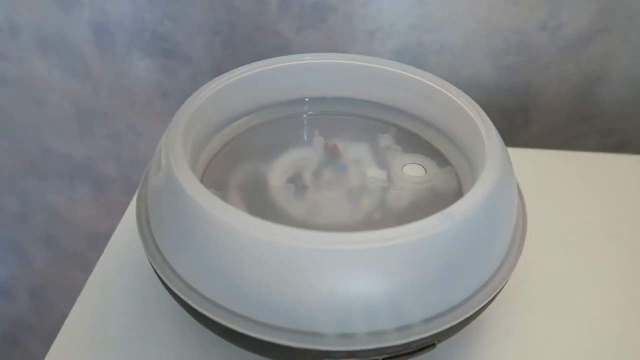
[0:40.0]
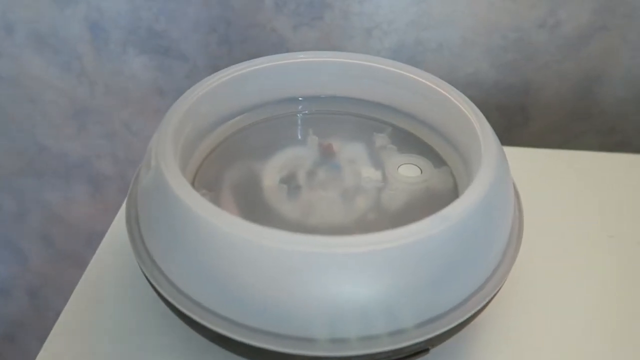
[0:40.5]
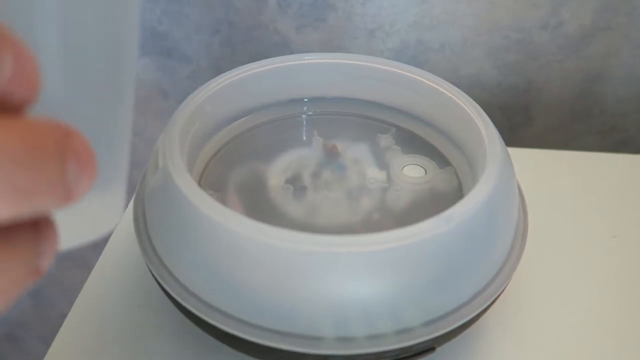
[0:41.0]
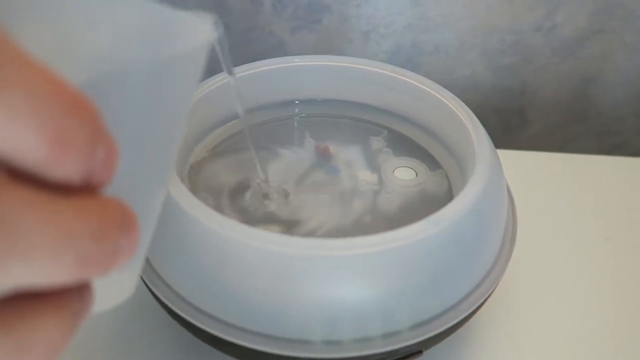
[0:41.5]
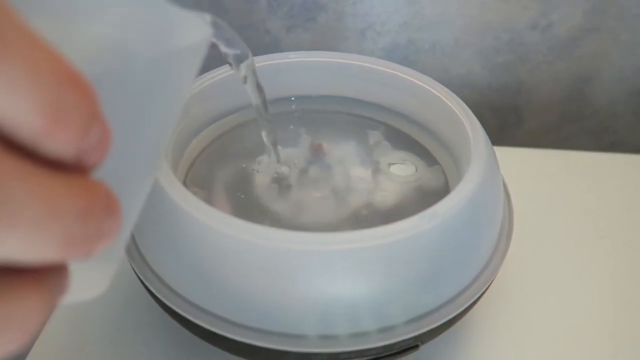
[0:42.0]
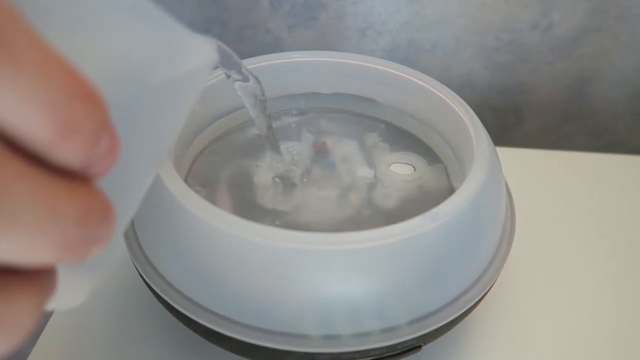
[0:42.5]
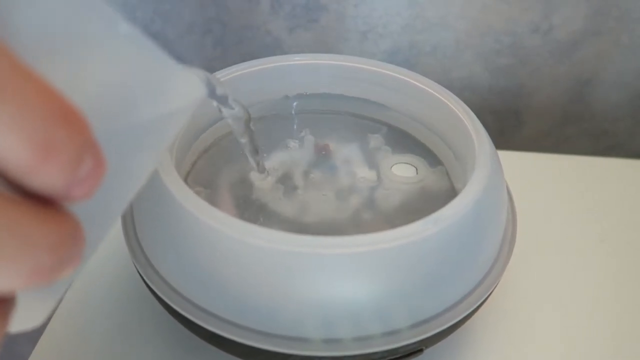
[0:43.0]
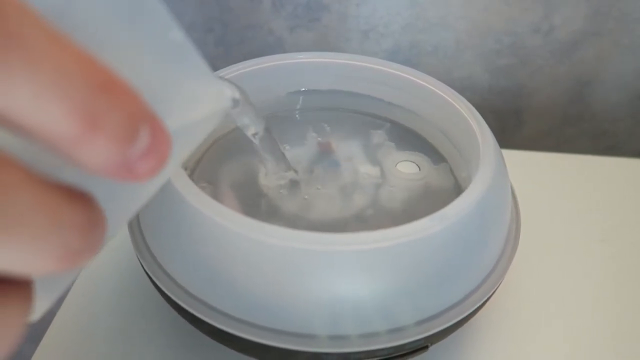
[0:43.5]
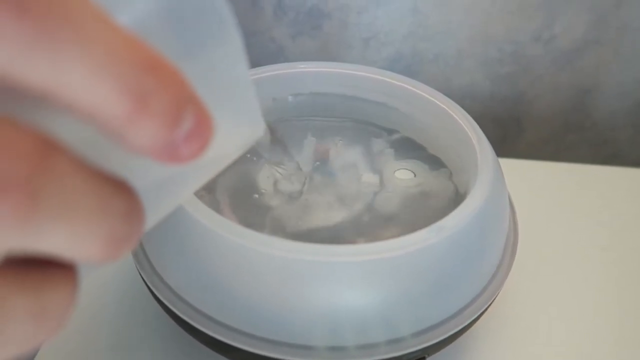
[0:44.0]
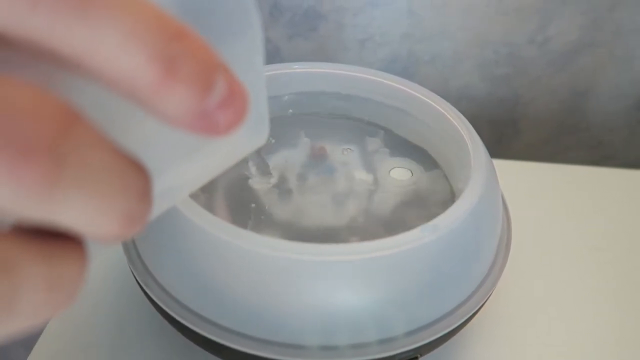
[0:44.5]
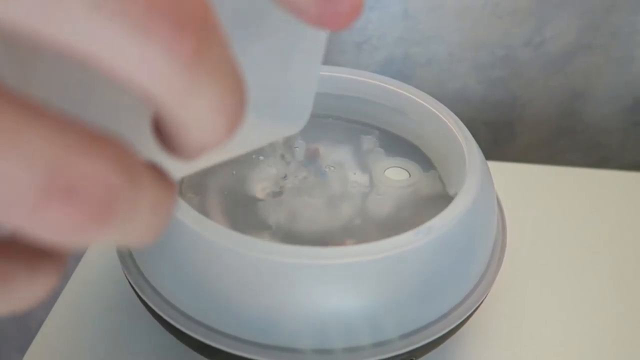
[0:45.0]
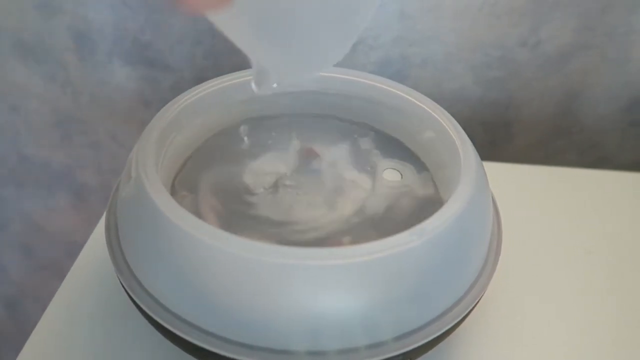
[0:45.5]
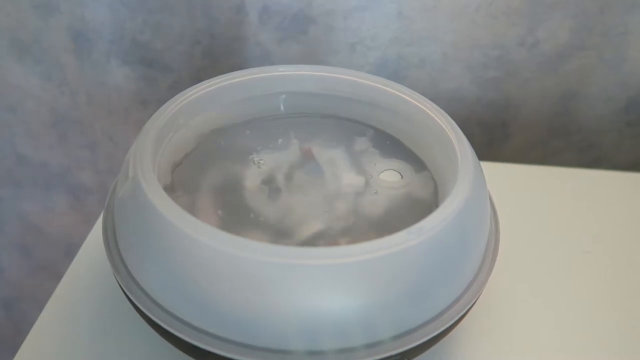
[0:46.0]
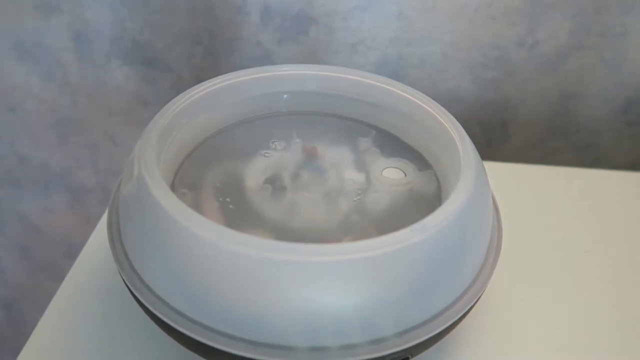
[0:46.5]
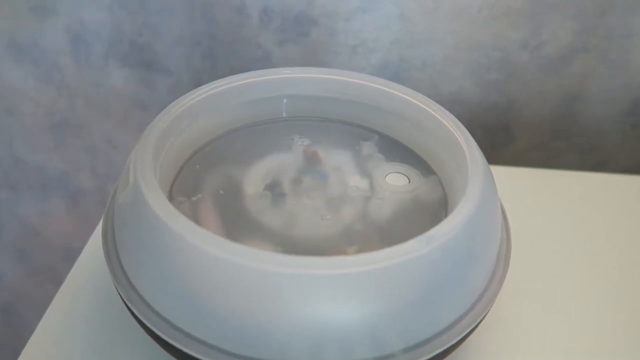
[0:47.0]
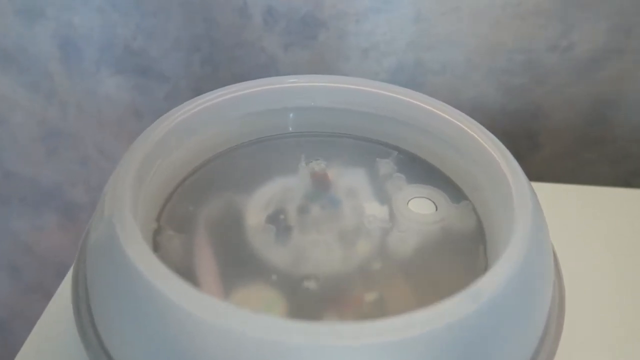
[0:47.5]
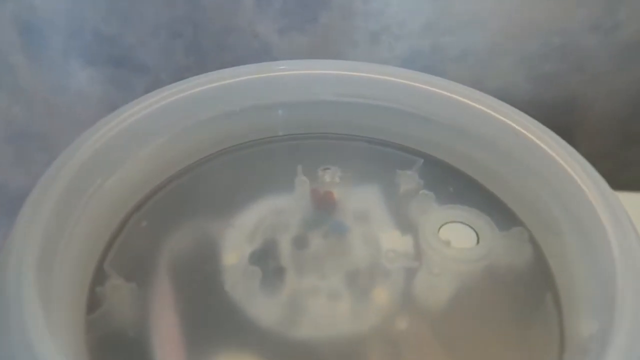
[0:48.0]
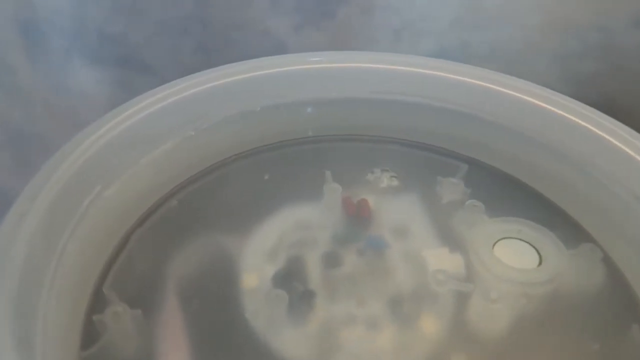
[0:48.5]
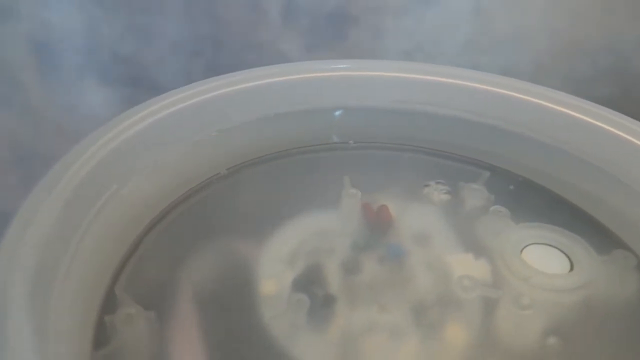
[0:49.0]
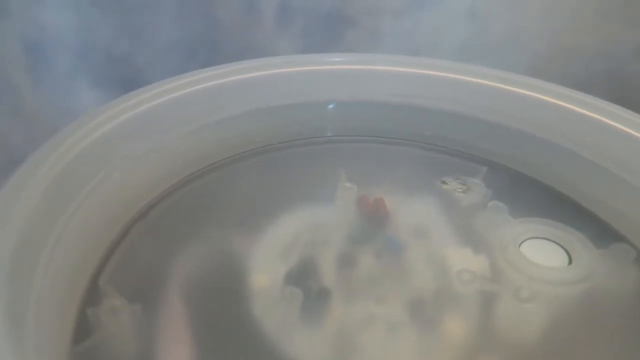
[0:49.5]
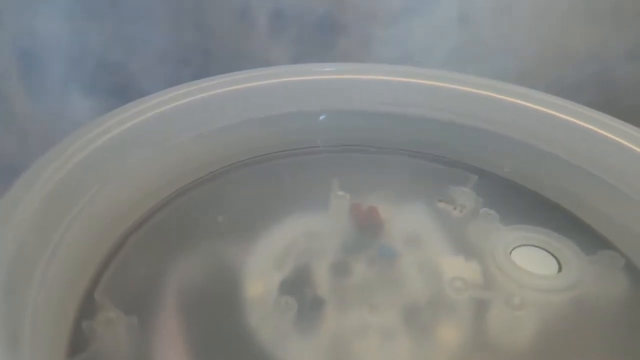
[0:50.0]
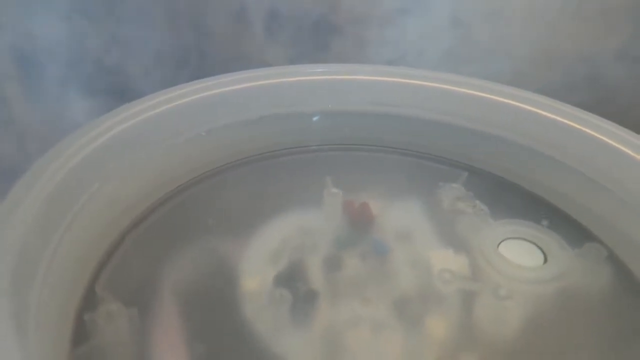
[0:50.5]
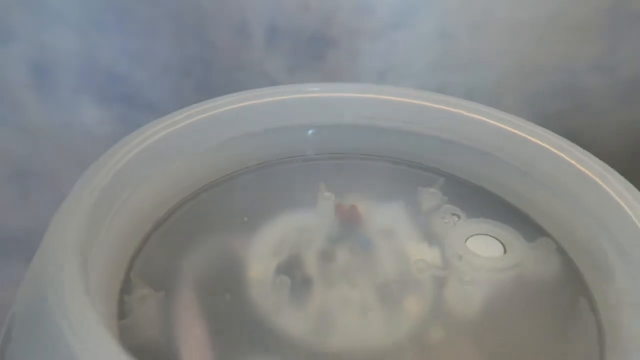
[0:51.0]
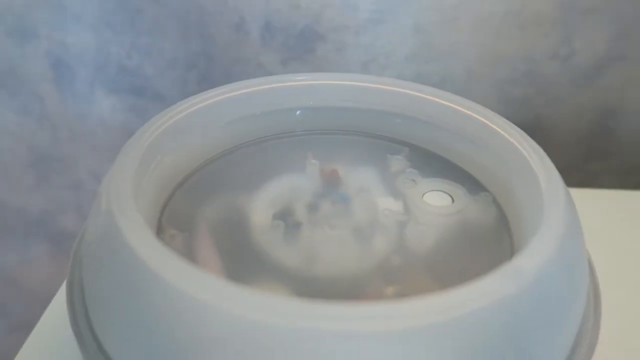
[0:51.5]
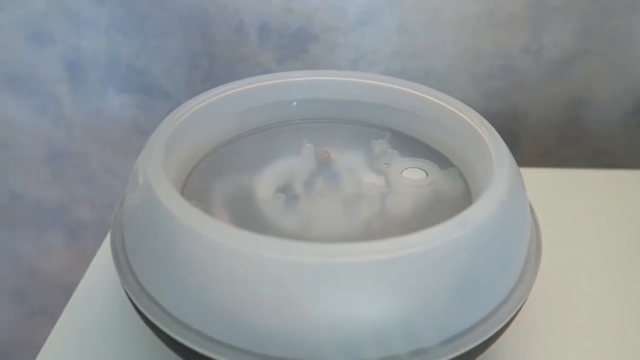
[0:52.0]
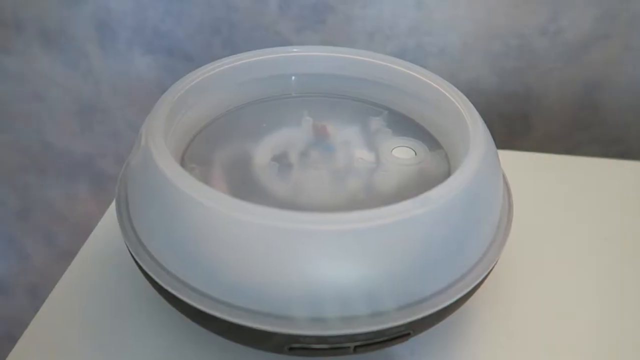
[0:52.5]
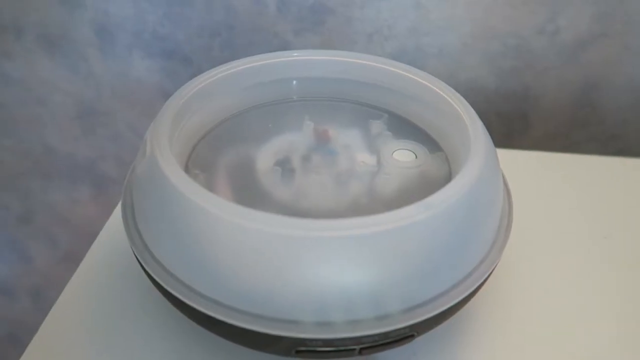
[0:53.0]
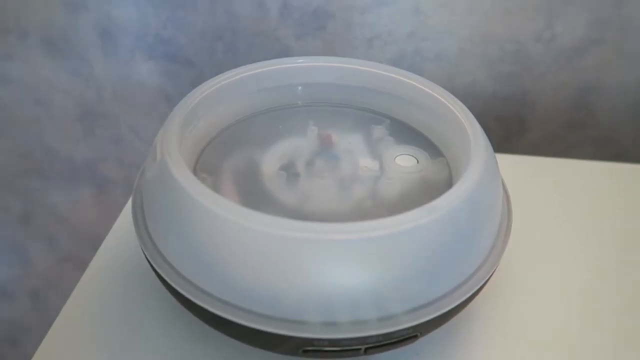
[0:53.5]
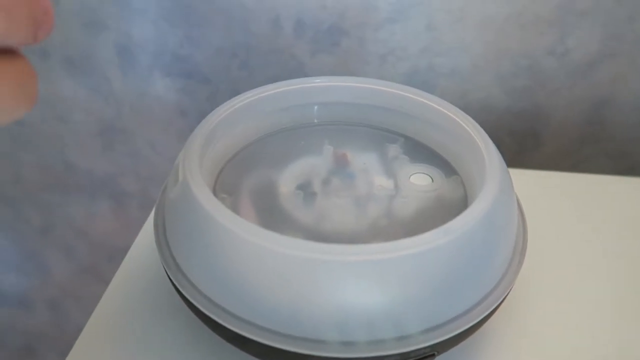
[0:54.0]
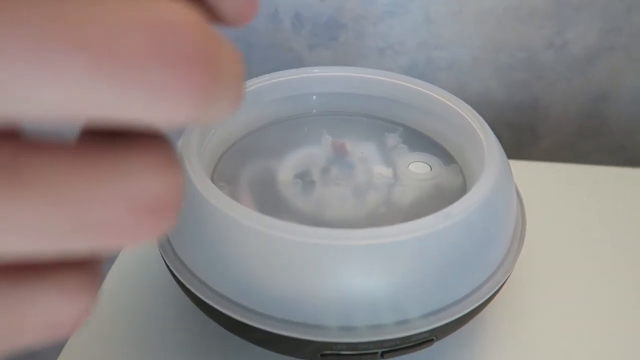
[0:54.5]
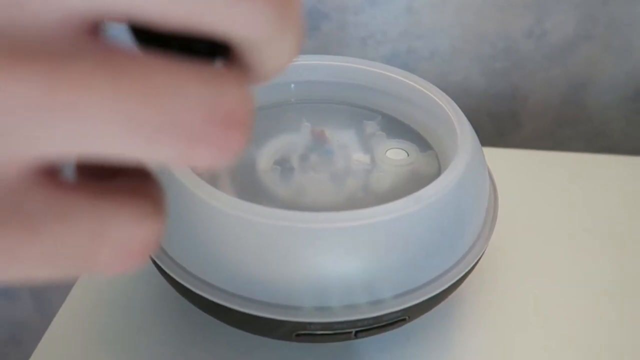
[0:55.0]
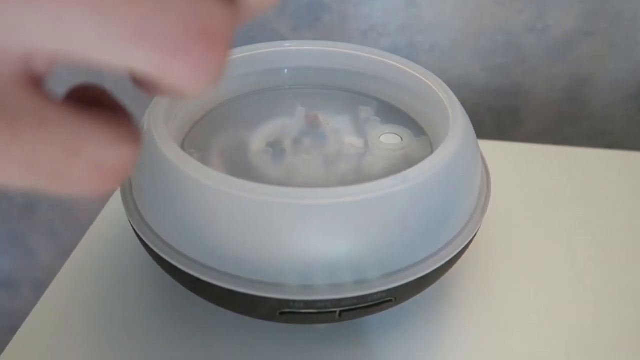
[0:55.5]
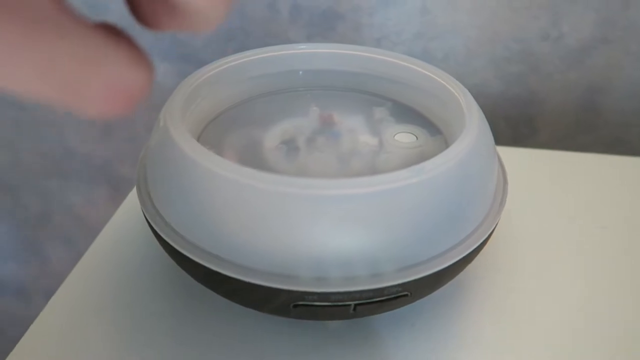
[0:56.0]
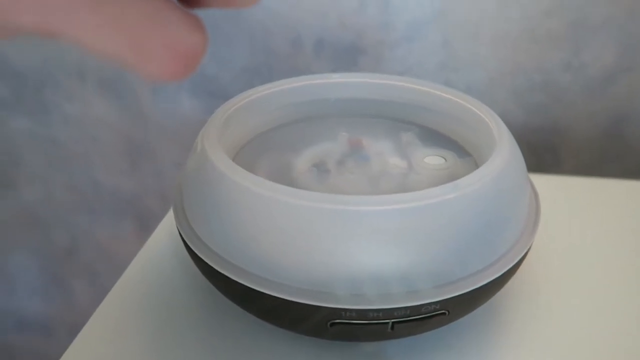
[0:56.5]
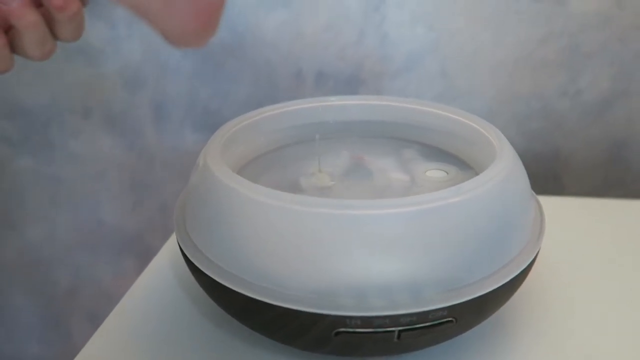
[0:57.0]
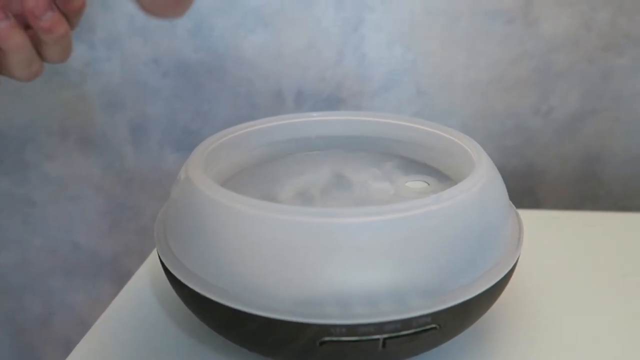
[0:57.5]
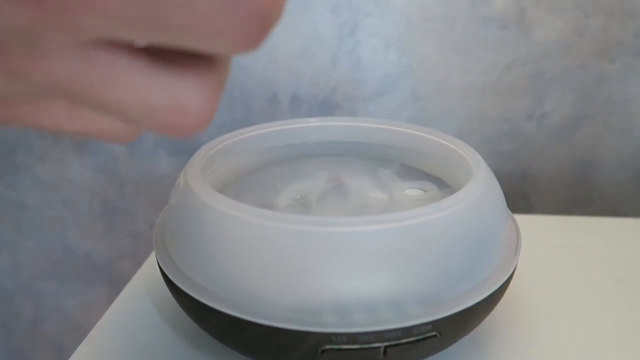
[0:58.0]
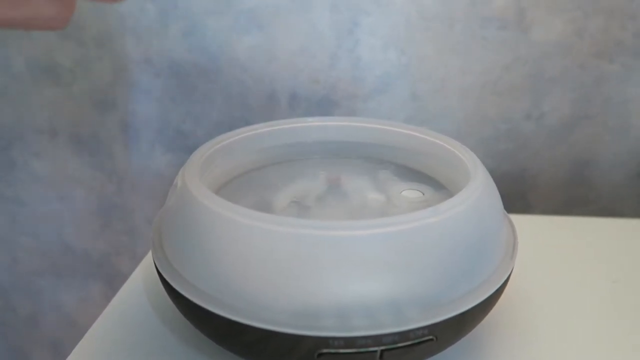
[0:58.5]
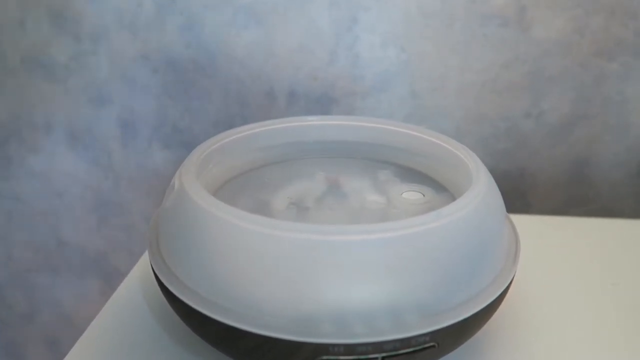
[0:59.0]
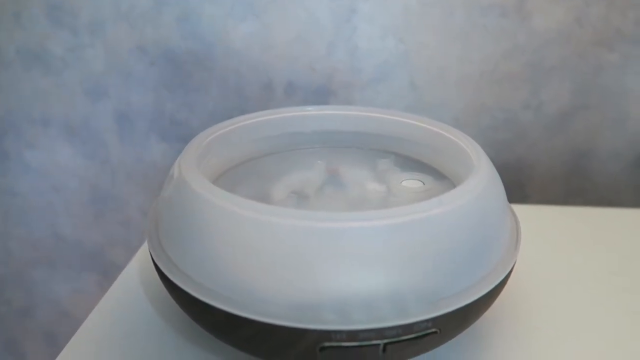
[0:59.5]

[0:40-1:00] The diffuser is being filled with water. Its bottom component is white, with little white plastic components visible inside below the water. A person with white skin, whose hand and fingers are visible on screen, pours water in from a small water container, empties it, and taps it so the last few drops come out. The camera zooms in, showing the water right near the top of the container, with the sort of white plastic components below it. A couple of drops of oil are then added to the water, about three or four drops in total. Behind the diffuser is a blue and white wall with a pattern almost like clouds in the sky. The diffuser is on a white desk, and the bottom of the diffuser is black.